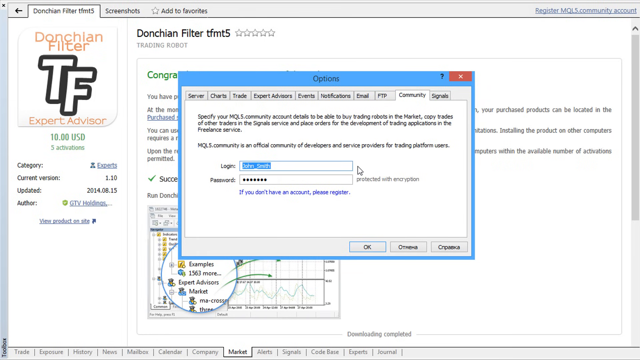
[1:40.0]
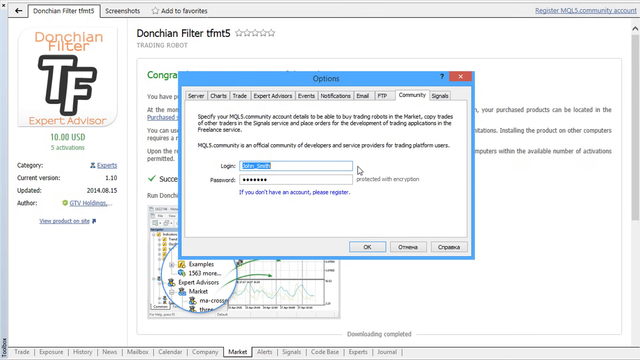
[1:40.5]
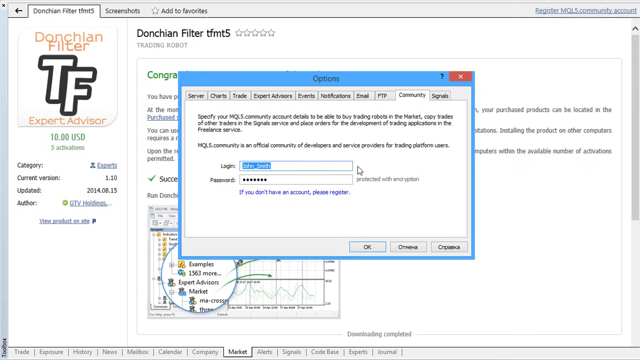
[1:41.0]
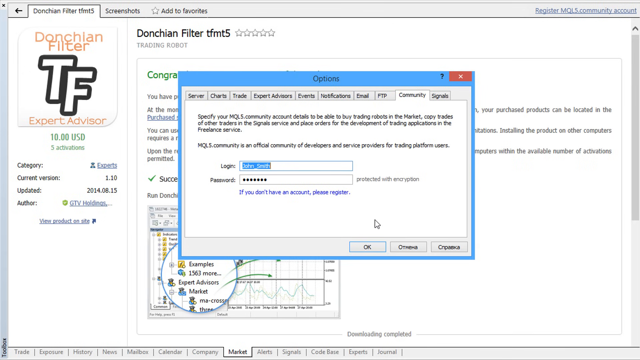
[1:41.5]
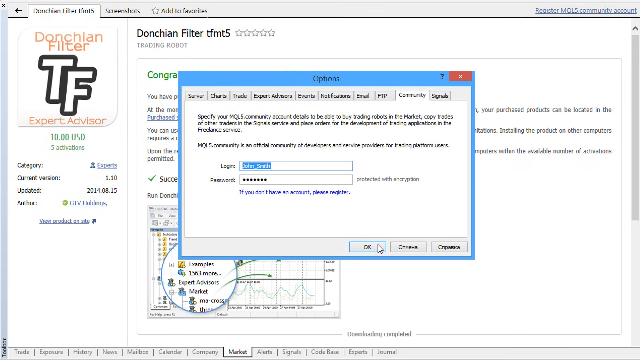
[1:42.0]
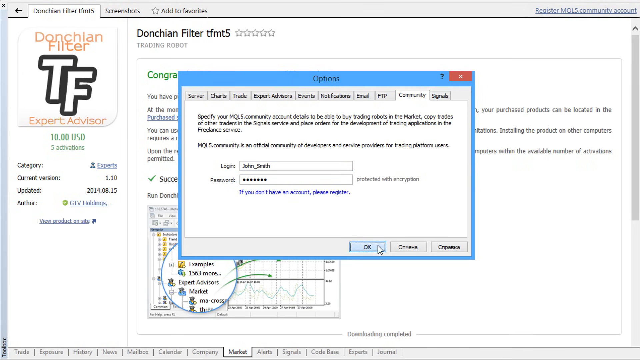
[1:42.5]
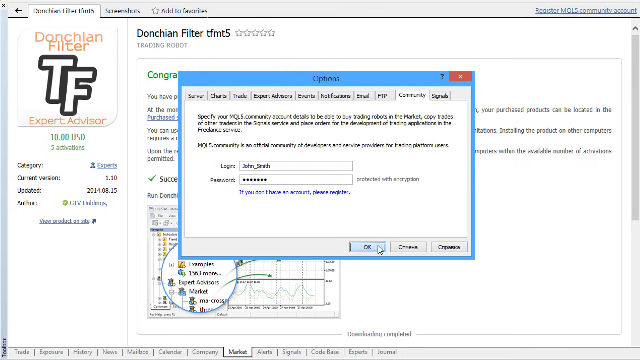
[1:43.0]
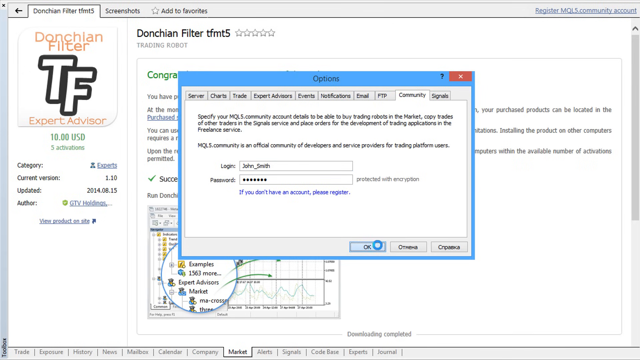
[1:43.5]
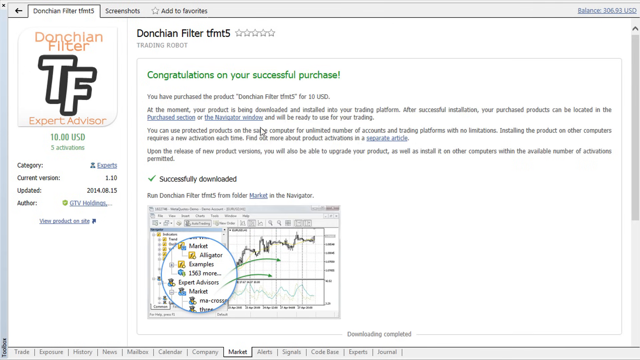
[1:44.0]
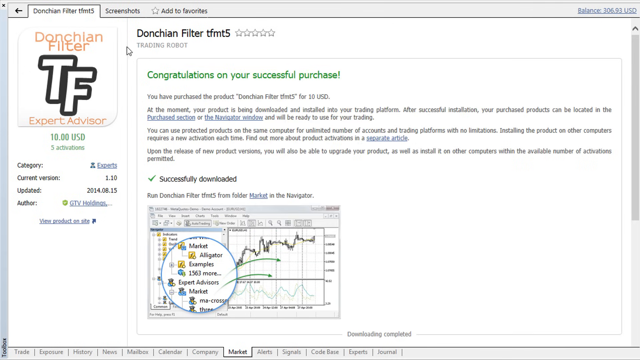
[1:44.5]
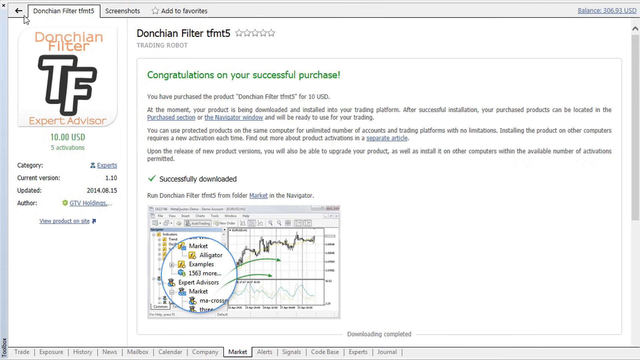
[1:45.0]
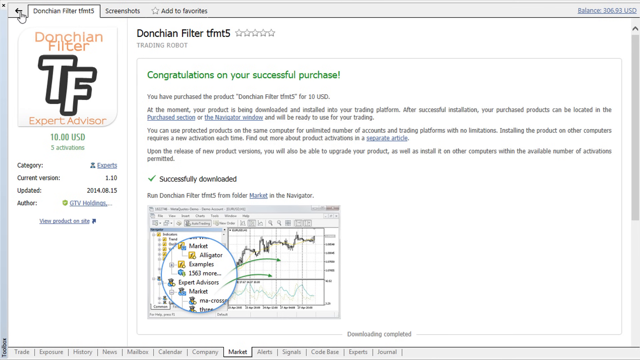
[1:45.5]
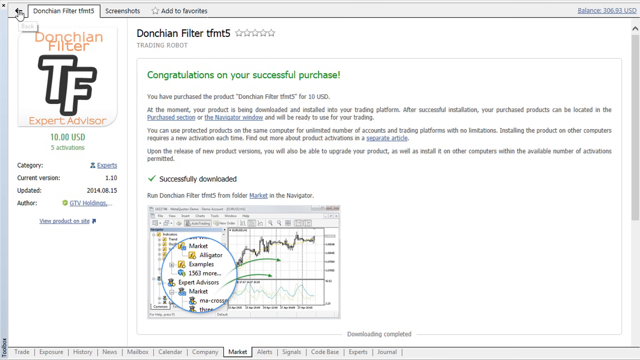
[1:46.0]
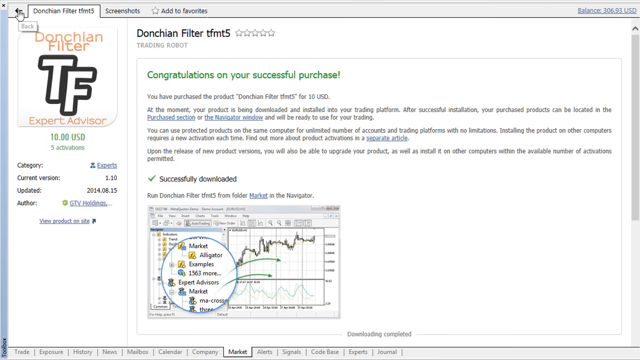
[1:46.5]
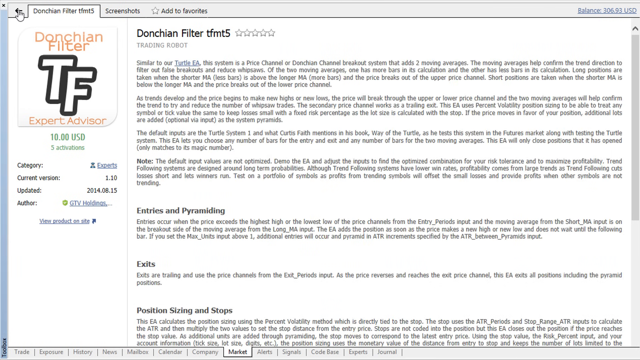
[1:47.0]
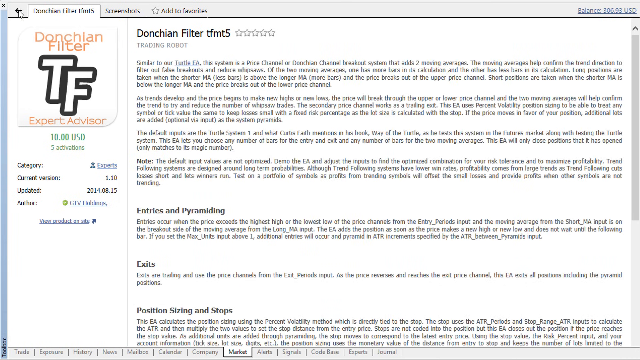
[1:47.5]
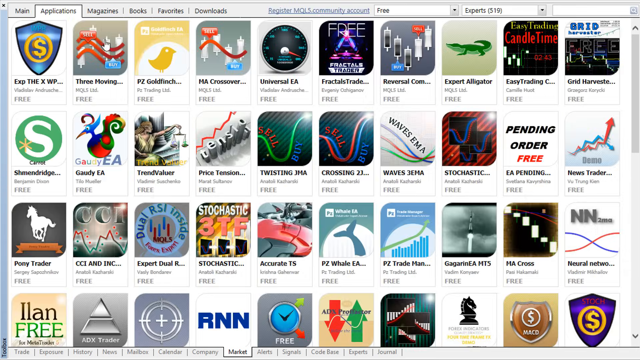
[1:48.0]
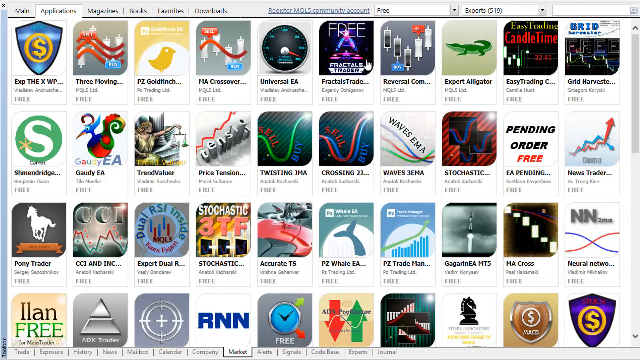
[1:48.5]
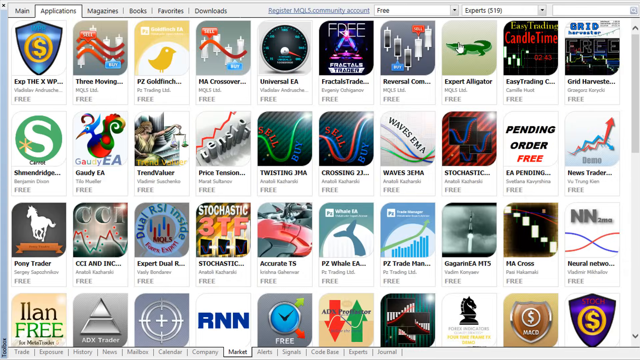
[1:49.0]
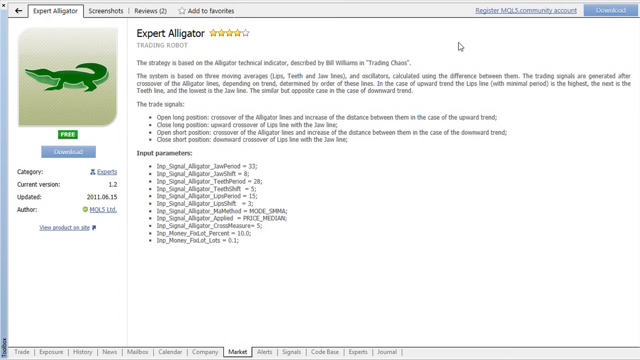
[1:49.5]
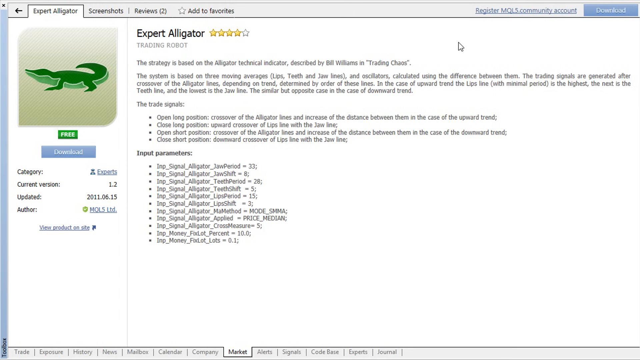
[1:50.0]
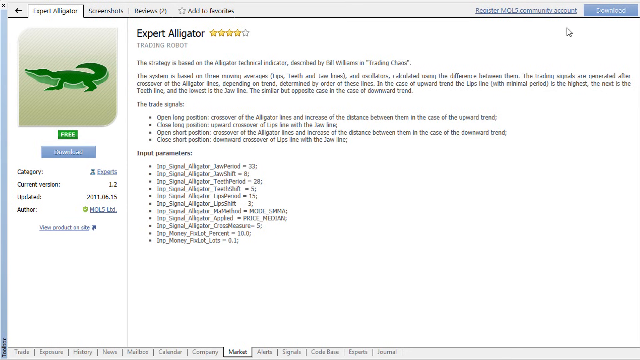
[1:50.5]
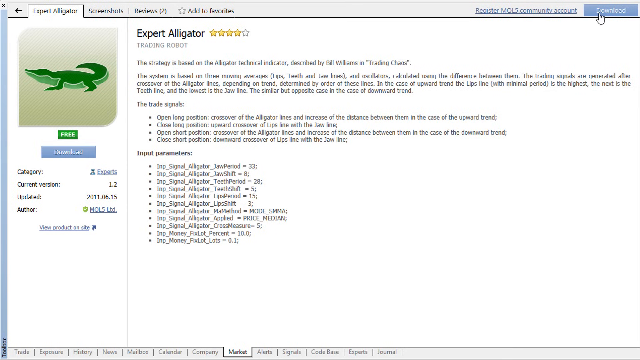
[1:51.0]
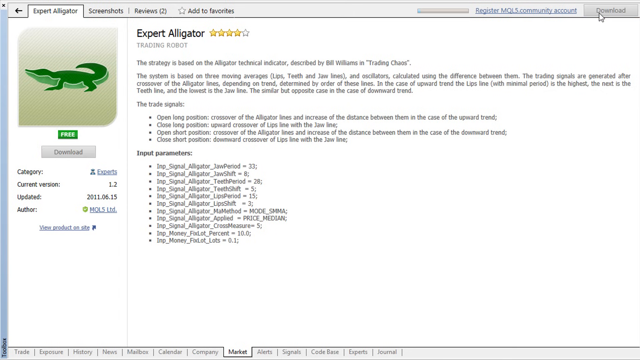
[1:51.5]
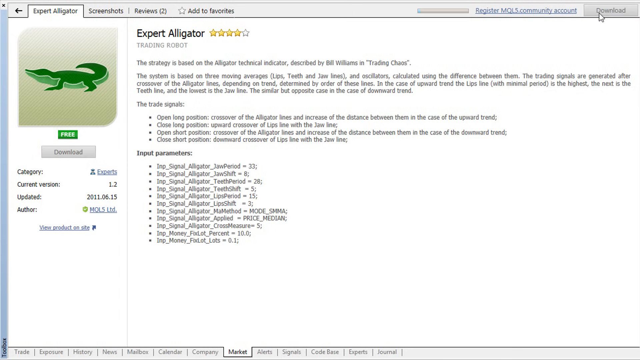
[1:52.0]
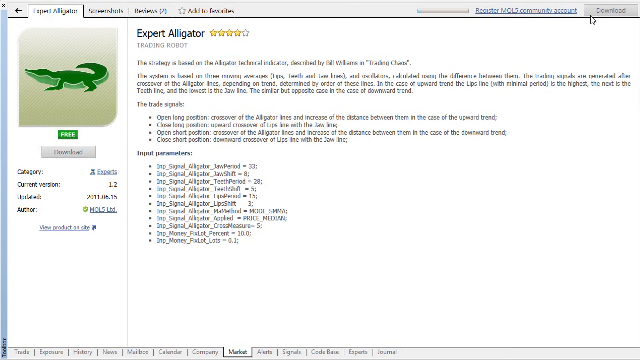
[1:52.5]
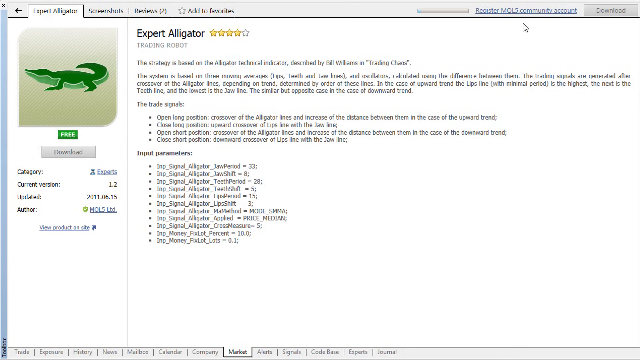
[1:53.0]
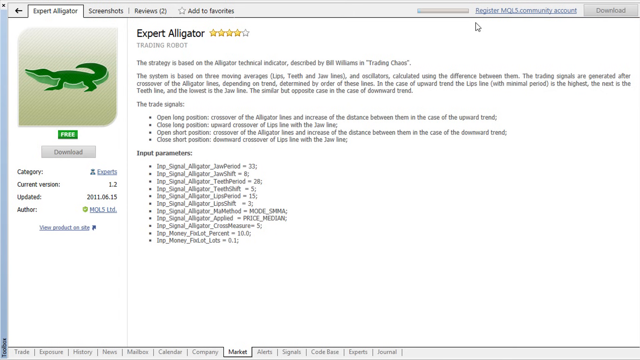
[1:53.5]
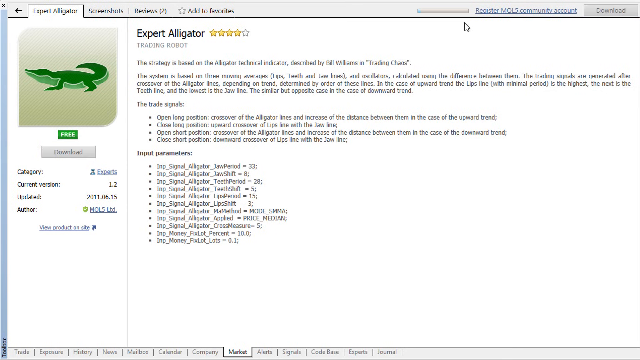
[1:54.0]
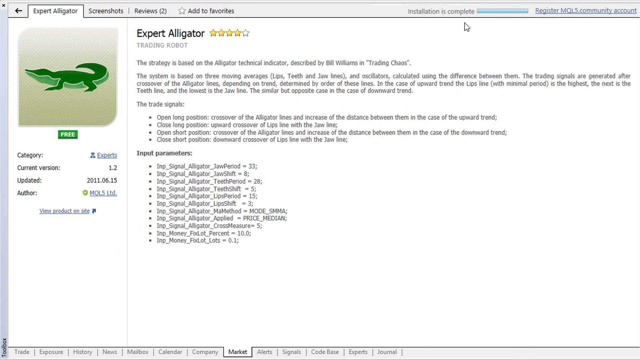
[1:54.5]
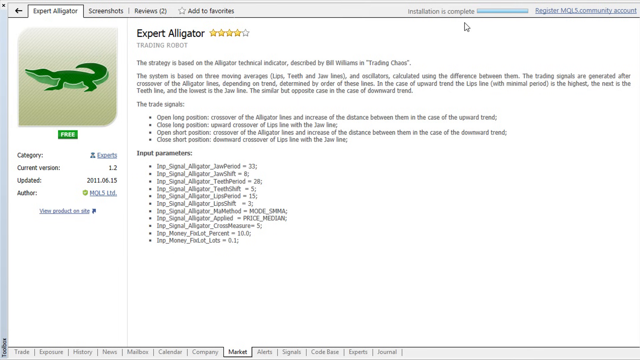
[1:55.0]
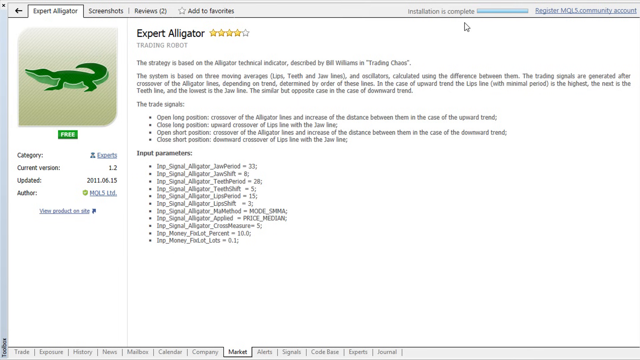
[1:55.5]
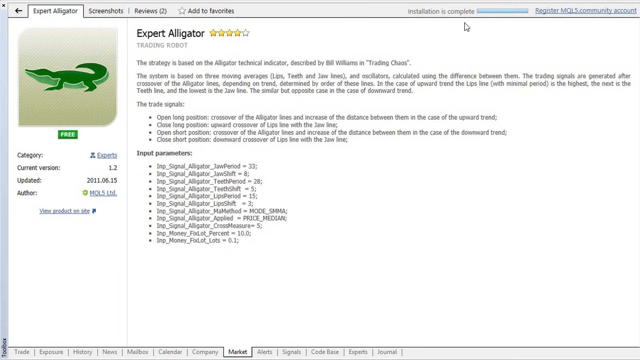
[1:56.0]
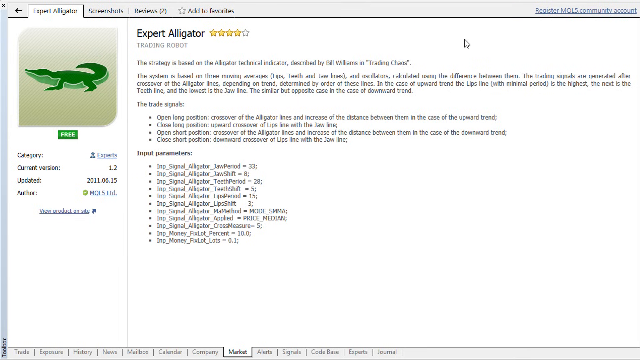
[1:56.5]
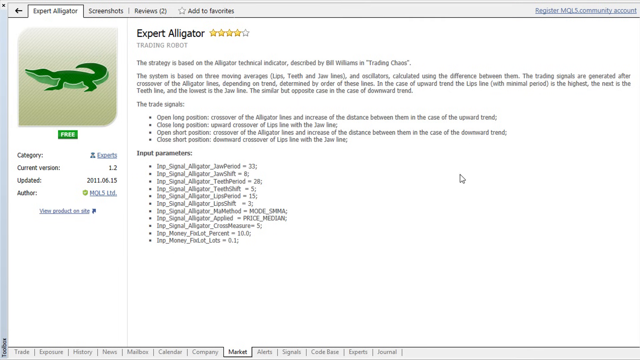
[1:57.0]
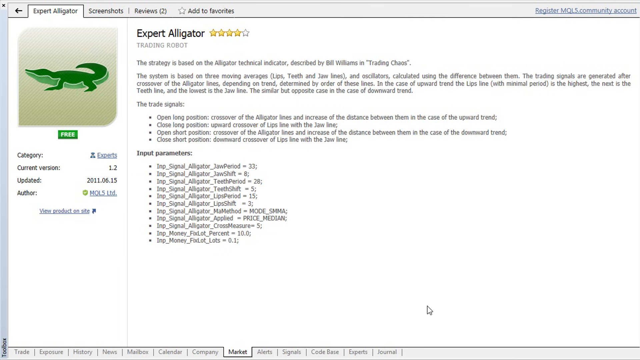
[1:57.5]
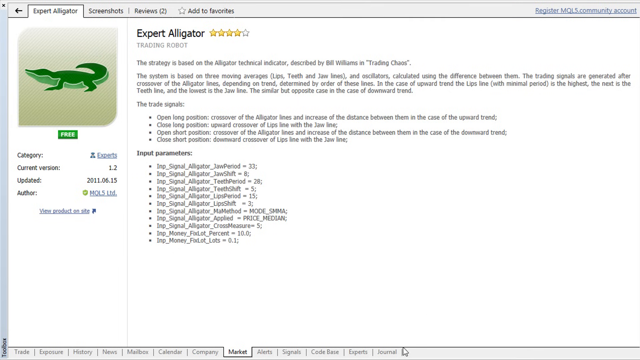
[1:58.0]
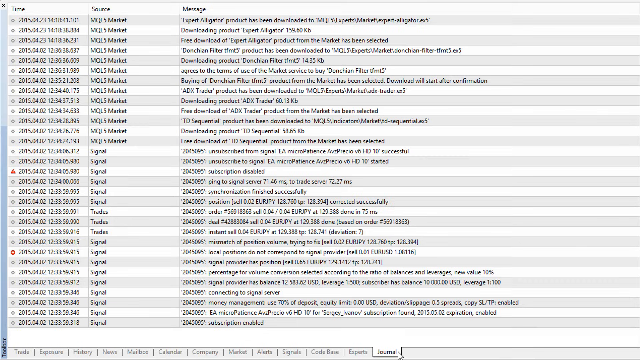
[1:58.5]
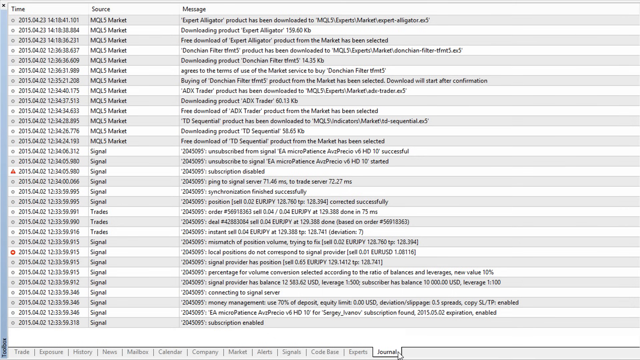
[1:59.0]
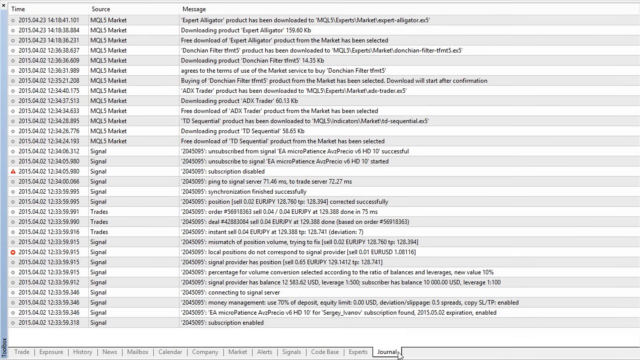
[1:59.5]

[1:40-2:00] The login name, John Smith, is highlighted, and the OK button at the bottom of the window is clicked. The cursor goes to the top left corner and clicks the Back button, then the Back button again, returning to the screen with all the books, a total of 40 different book covers. Another book, called Expert Alligator, is clicked; it has a rating of four stars. The Download button in the top right corner is clicked, and the download begins. The book is free, as indicated on the left side: the book cover is a very simple art design of an alligator, and underneath it says "Free". The book finishes downloading, and it says "Installed Successfully". The mouse pointer then moves down from the top to the bottom, and the messages are clicked, bringing up a big list of messages about the actions taken and things bought. The dates on the left side are all from April 2015.